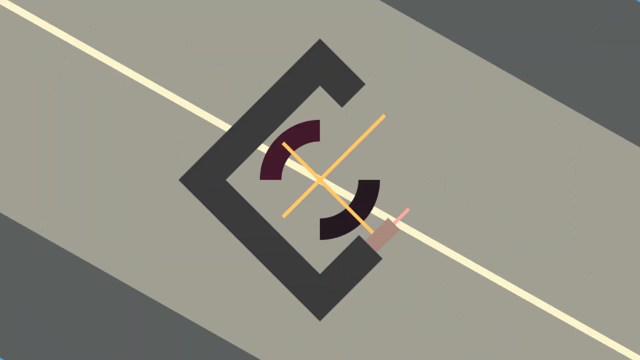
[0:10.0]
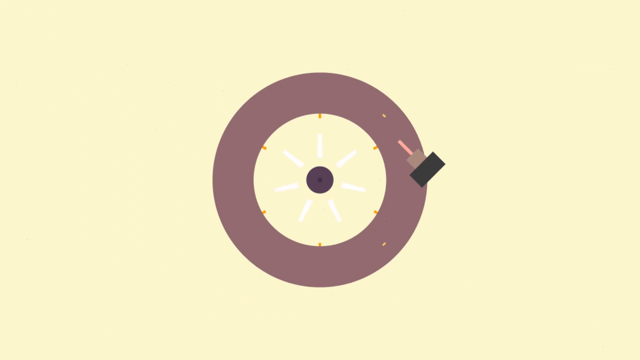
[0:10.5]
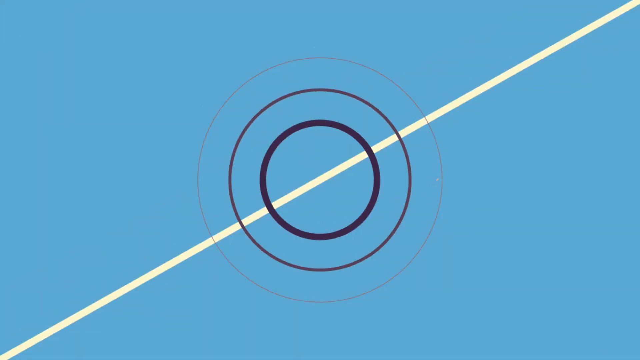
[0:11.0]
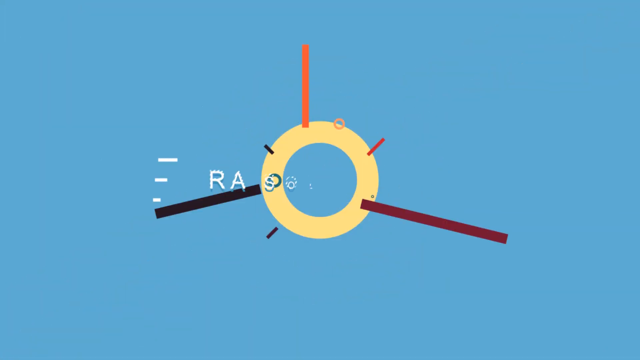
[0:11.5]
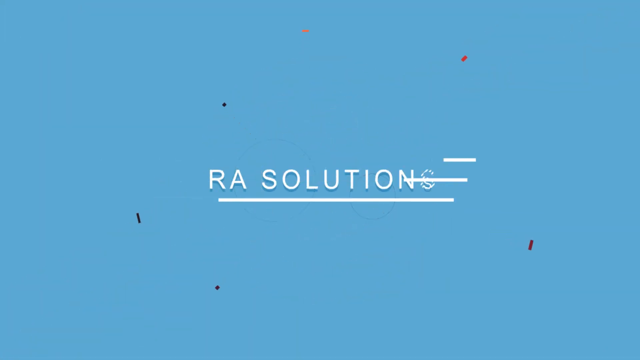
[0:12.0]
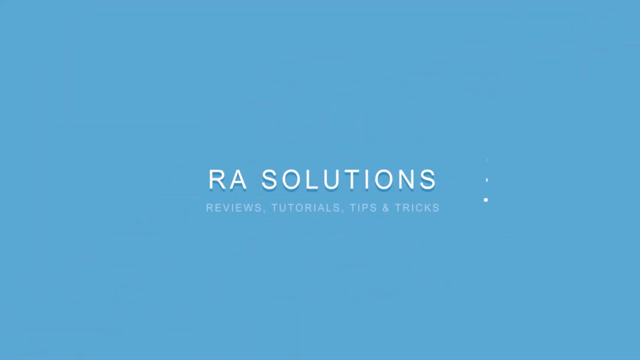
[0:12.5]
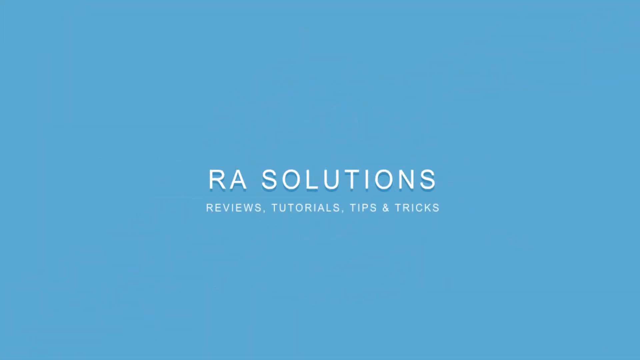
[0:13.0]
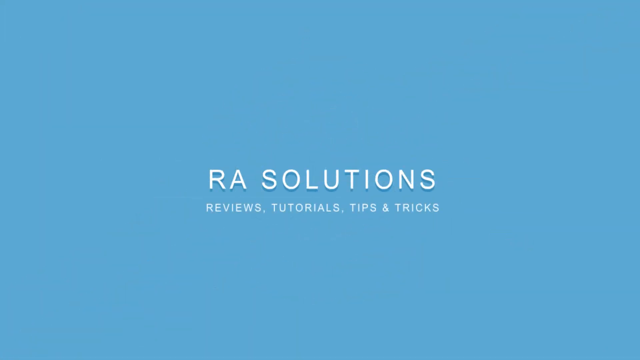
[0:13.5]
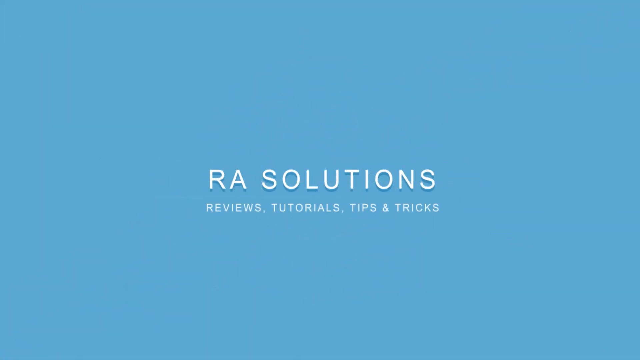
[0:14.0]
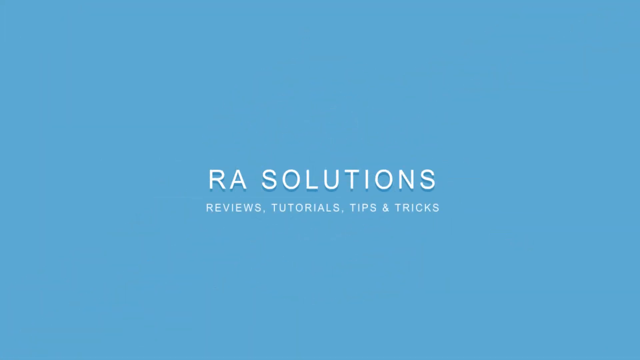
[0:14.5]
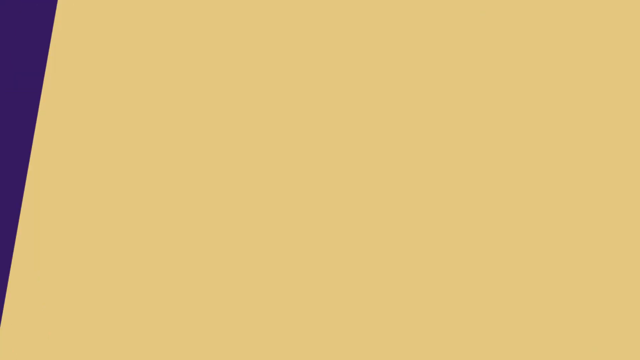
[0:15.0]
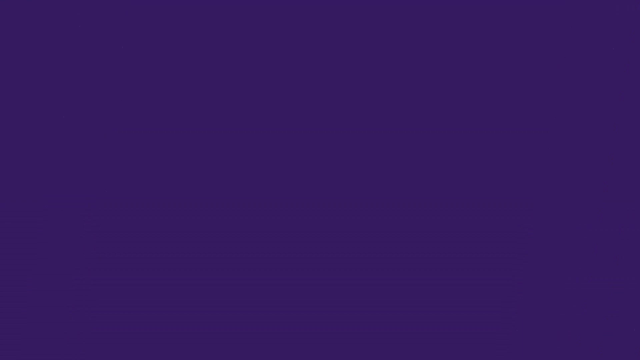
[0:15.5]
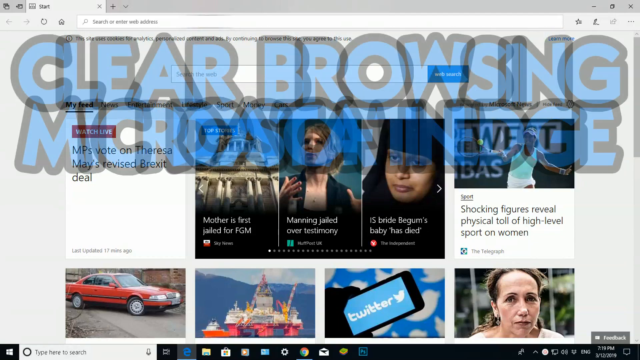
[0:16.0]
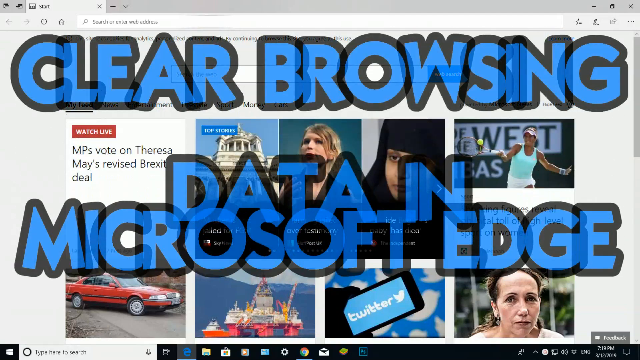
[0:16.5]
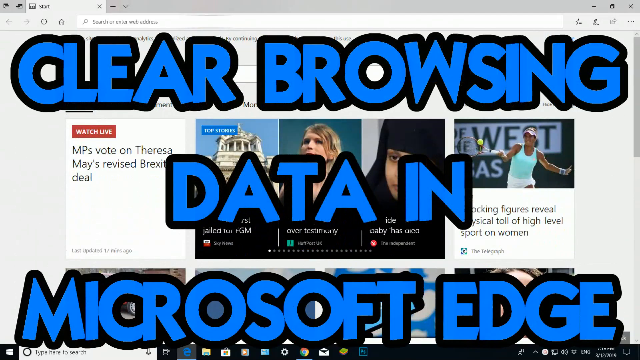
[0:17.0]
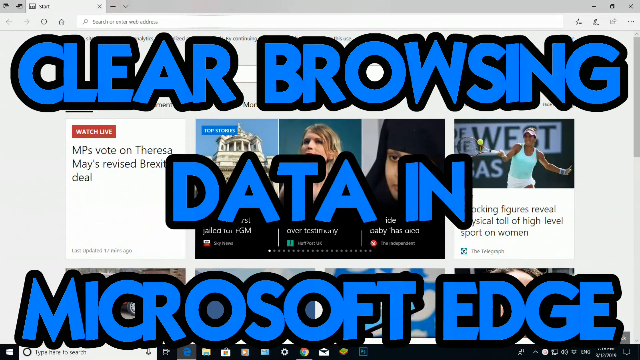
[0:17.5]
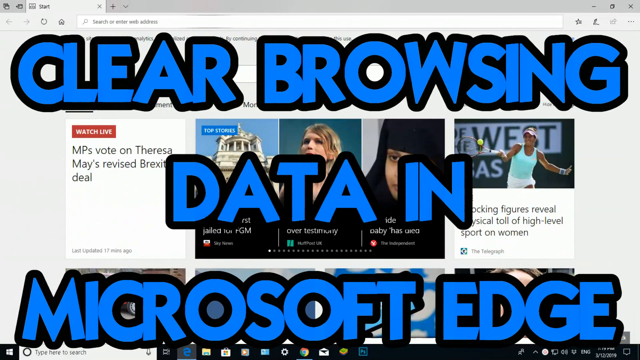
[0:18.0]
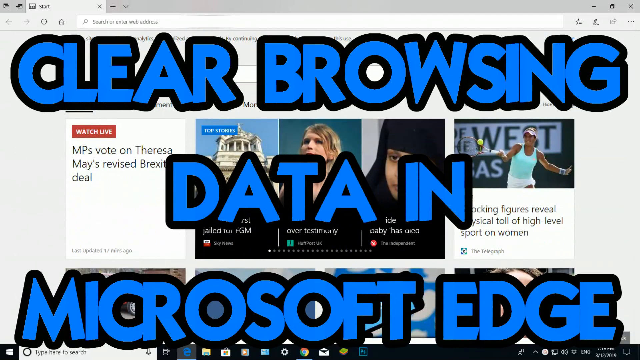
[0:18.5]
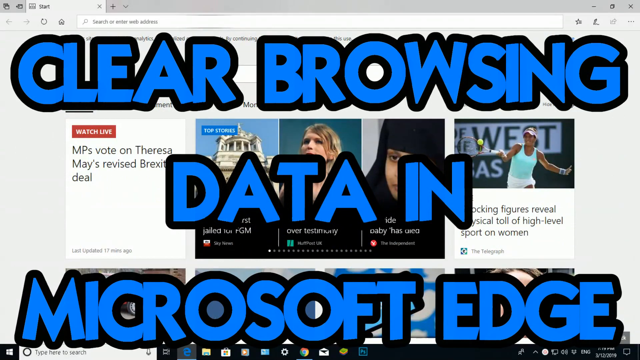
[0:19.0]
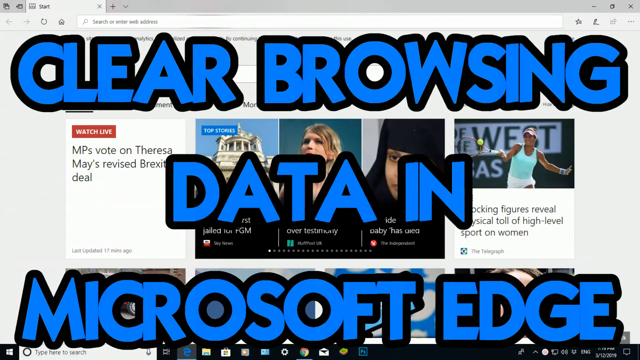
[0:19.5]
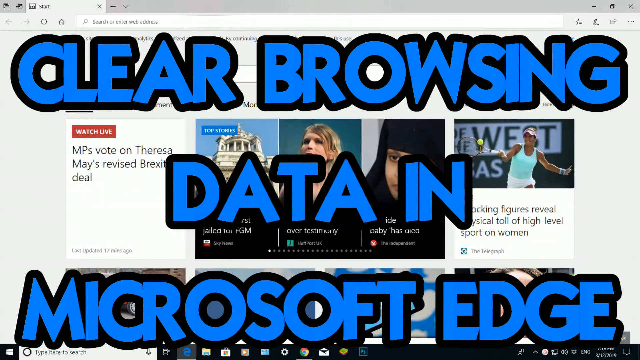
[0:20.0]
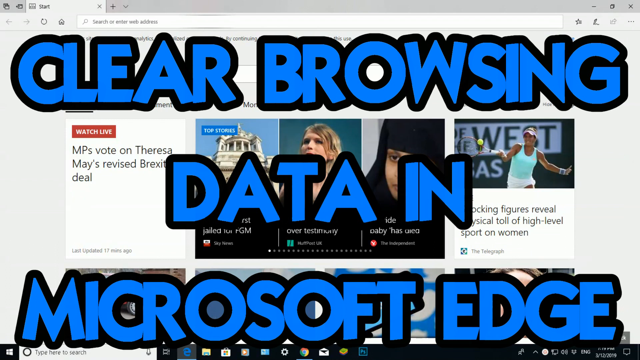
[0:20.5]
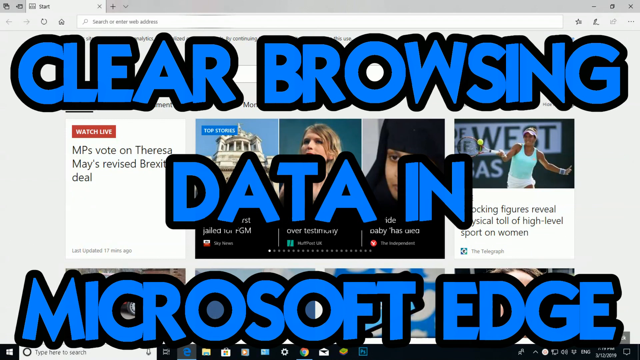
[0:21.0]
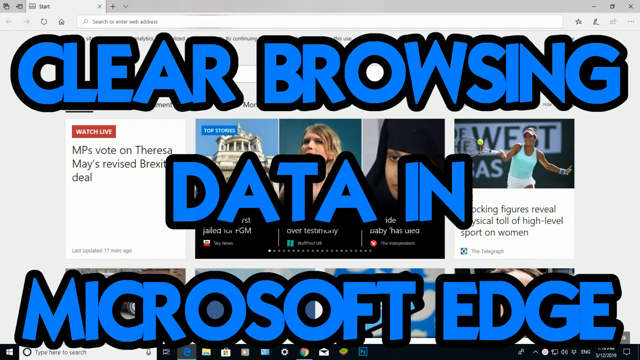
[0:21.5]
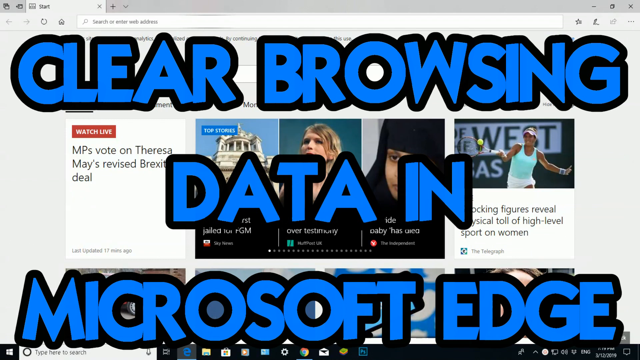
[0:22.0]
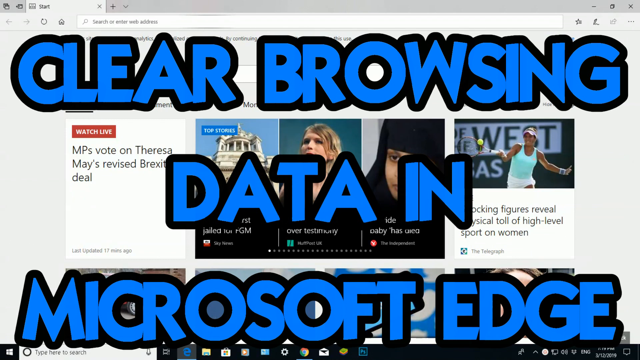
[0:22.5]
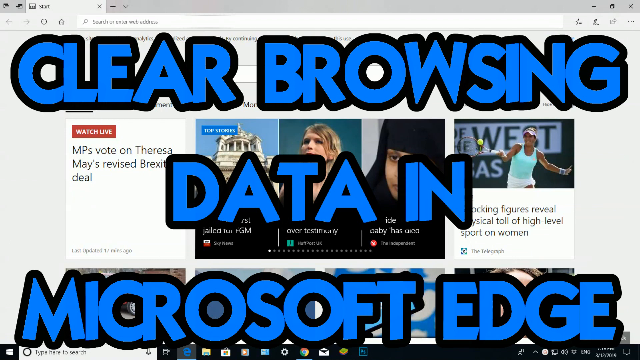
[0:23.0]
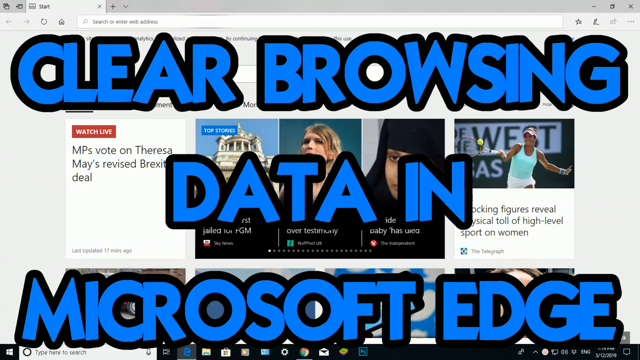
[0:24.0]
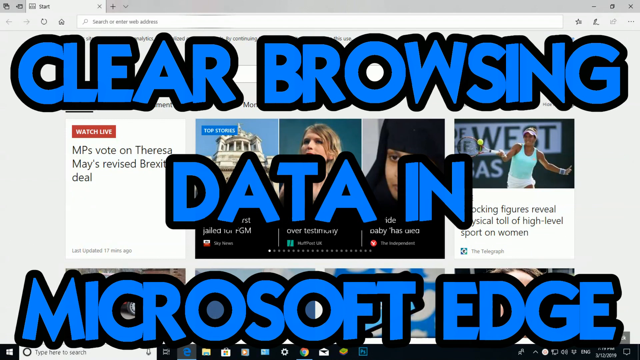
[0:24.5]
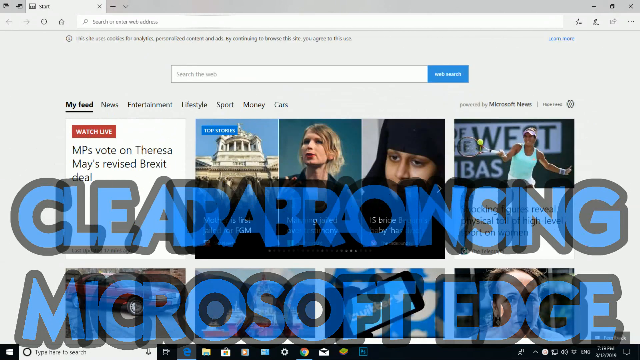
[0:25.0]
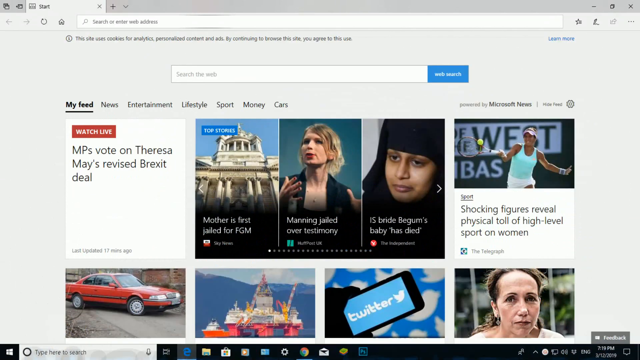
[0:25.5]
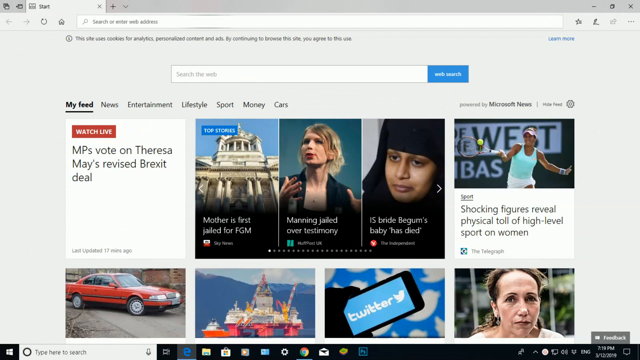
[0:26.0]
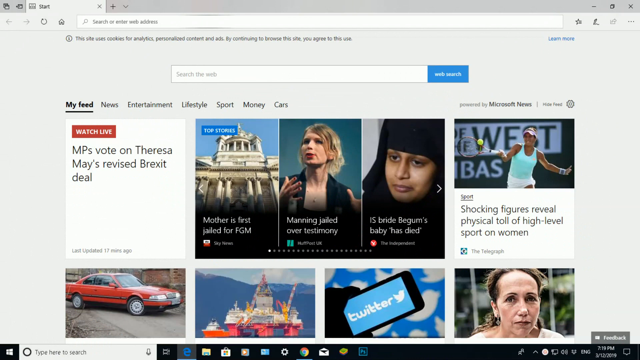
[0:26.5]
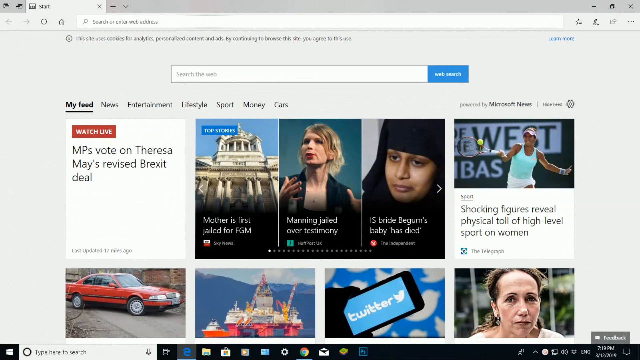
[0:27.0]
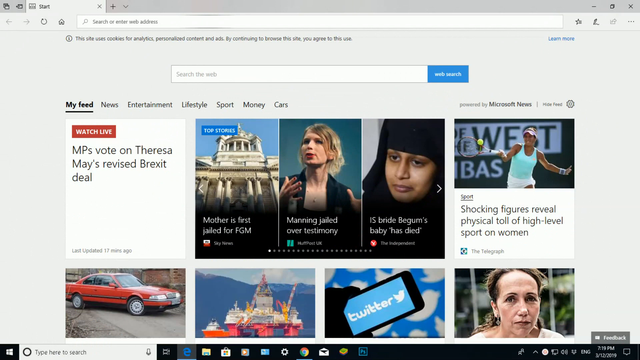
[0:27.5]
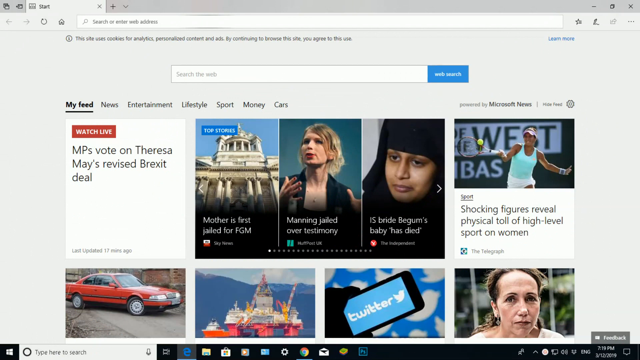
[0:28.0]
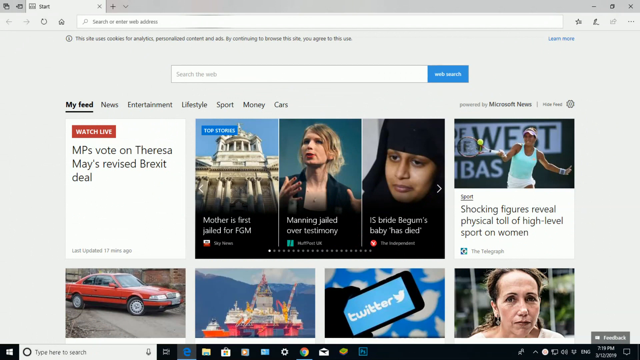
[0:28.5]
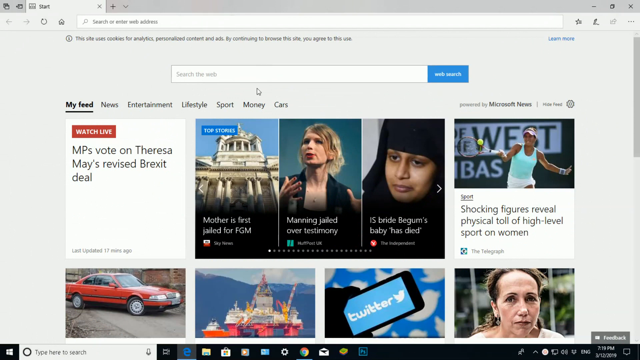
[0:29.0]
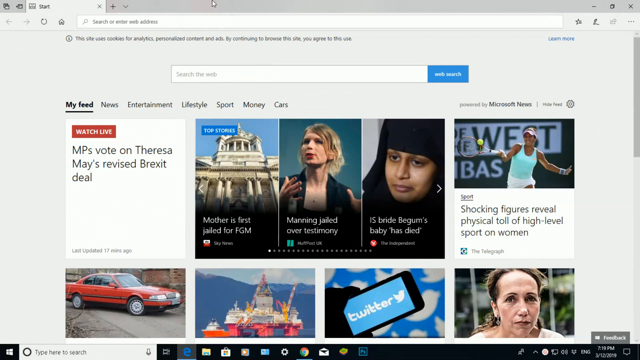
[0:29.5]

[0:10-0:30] A number of objects pop up in various colors, such as beige, red and blue. Text appears reading "RE Solutions" with the subheading "reviews, tutorials, tips, and tricks". The video then transitions to a website that looks like a news site, showing thumbnails of a person, a few people and a building, and an item that says "Watch Live". Large text covering about 80% of the screen pops up, reading "Clear Browsing Data in Microsoft Edge". The large text then fades away from top to bottom until it is completely gone, and the page takes up most of the view. The site is laid out like a news website, with tabs including "My Feed", "News", "Entertainment", "Lifestyle", "Sports", "Money" and "Cars".